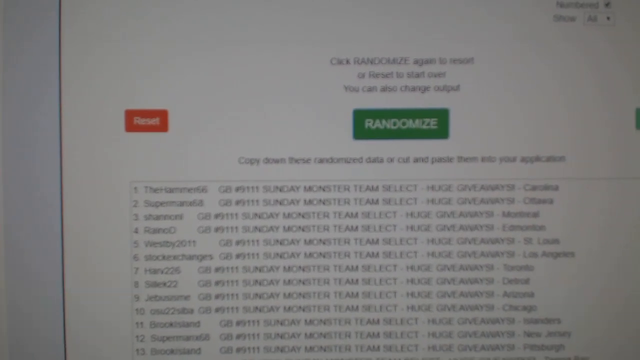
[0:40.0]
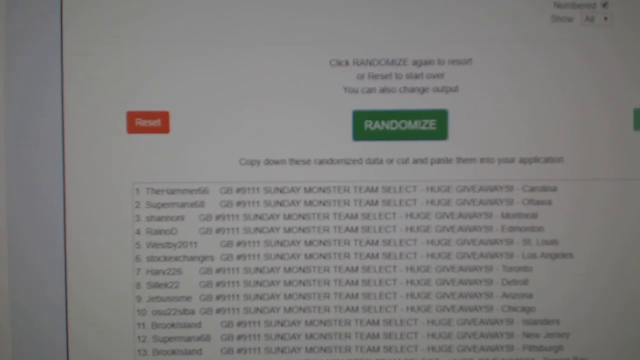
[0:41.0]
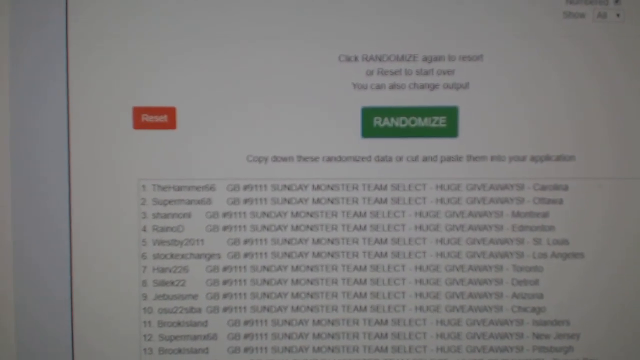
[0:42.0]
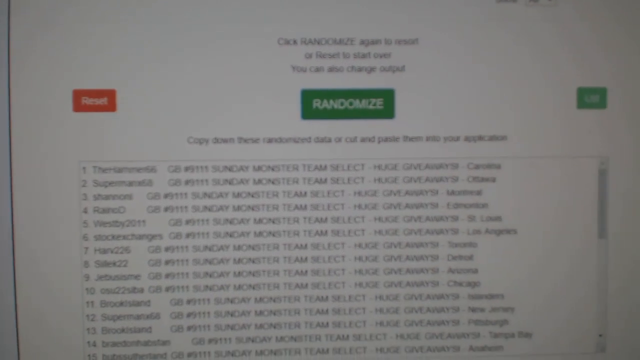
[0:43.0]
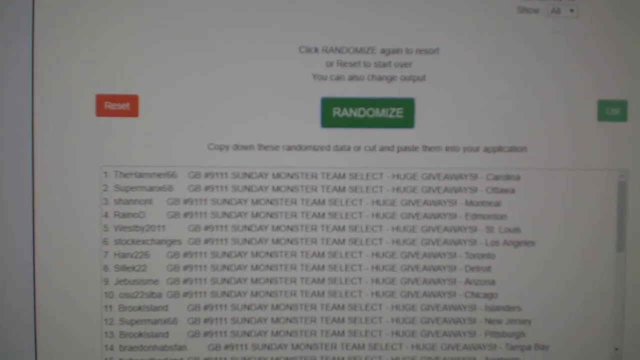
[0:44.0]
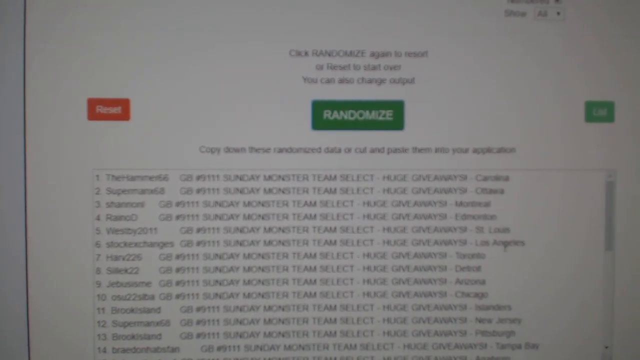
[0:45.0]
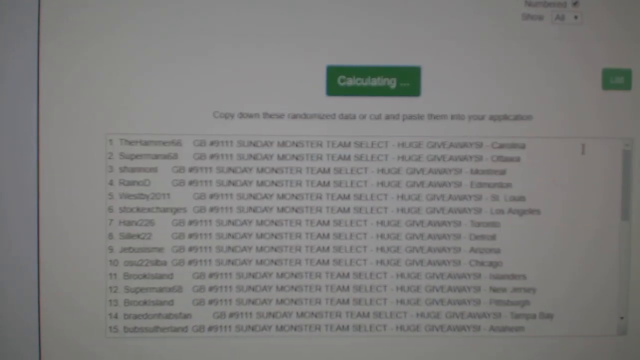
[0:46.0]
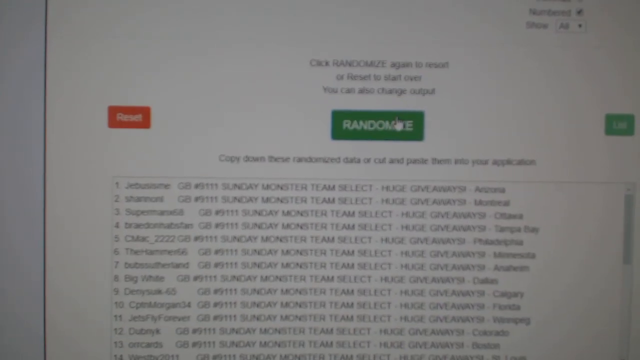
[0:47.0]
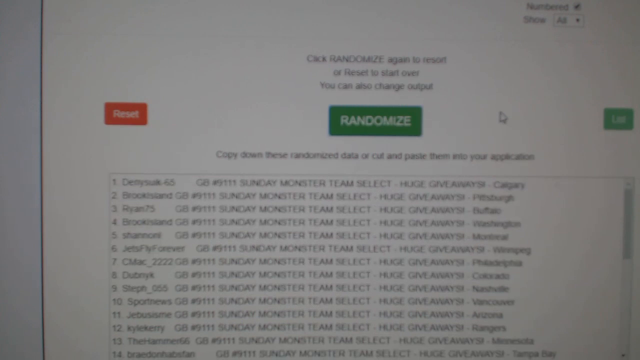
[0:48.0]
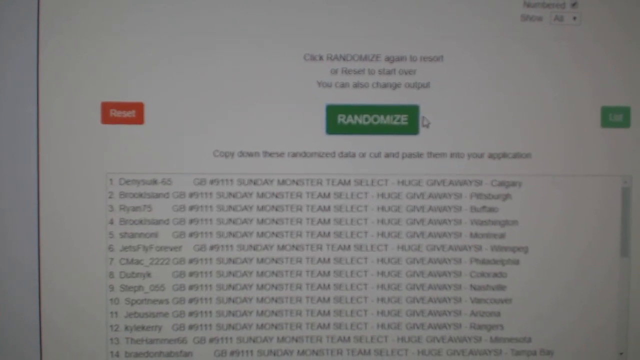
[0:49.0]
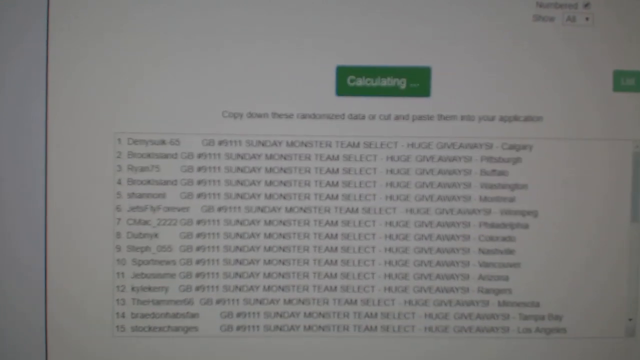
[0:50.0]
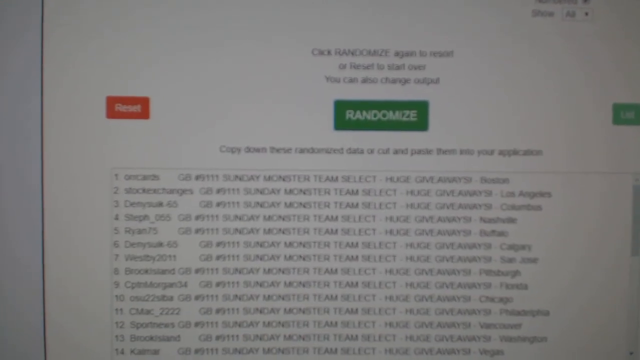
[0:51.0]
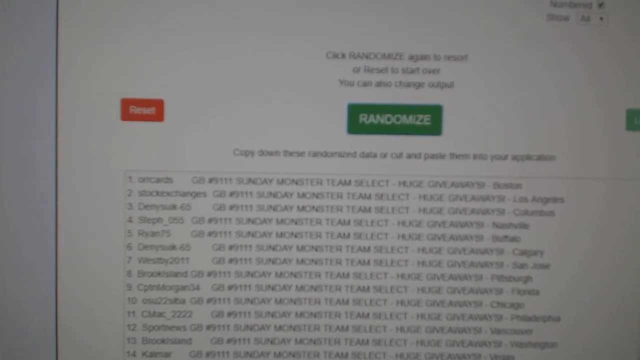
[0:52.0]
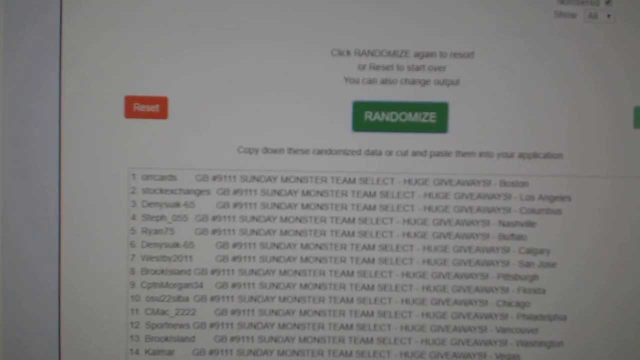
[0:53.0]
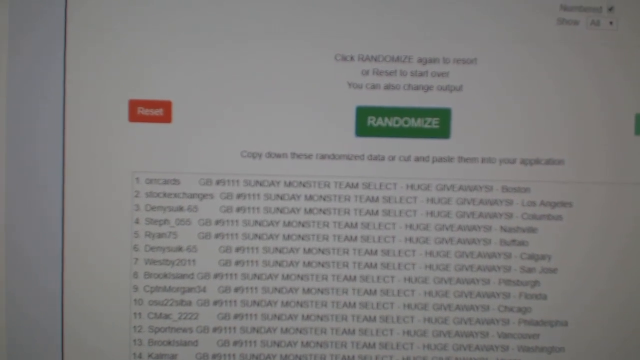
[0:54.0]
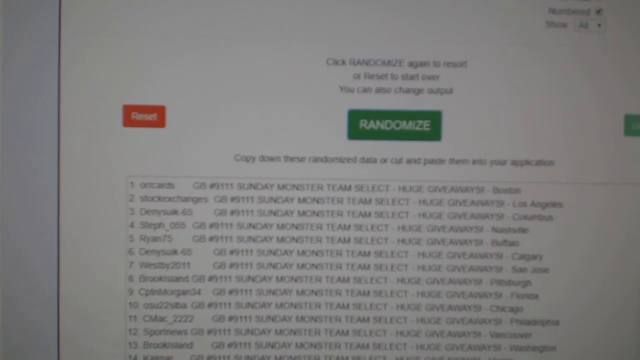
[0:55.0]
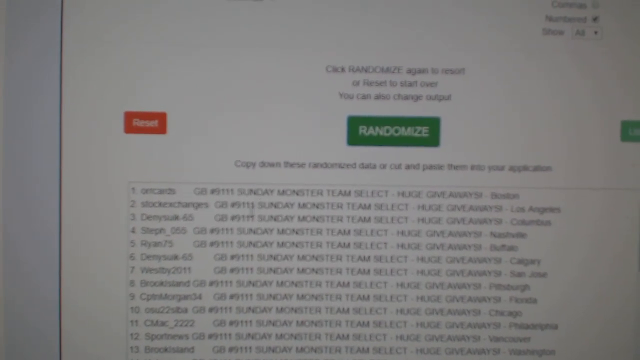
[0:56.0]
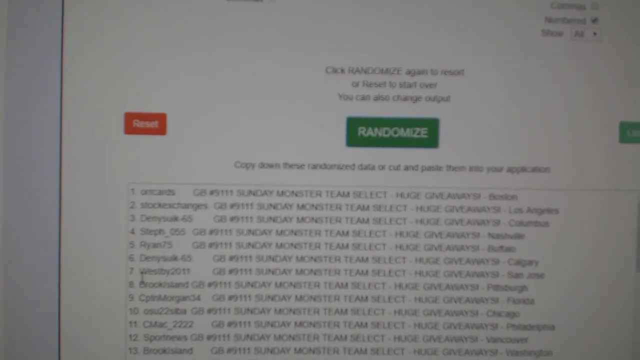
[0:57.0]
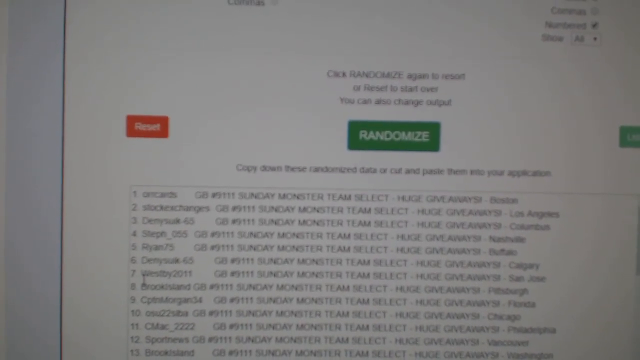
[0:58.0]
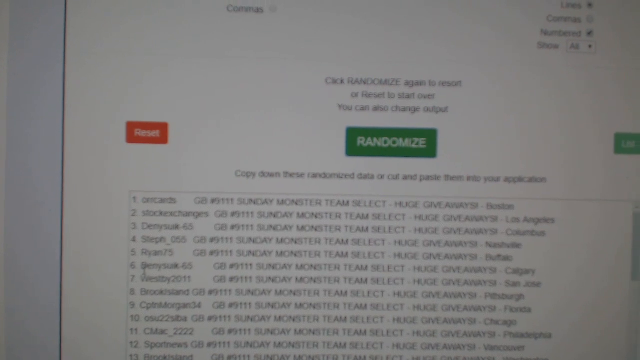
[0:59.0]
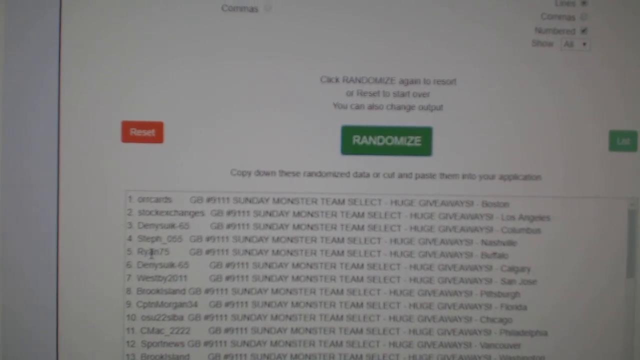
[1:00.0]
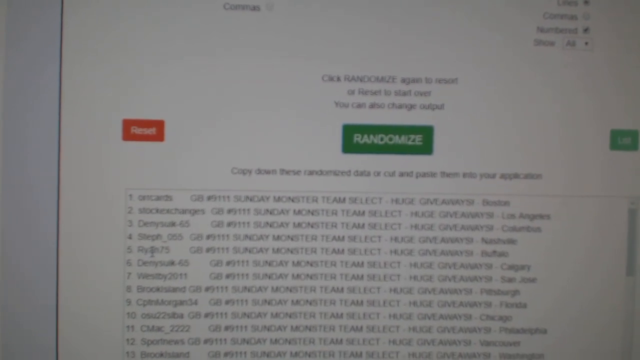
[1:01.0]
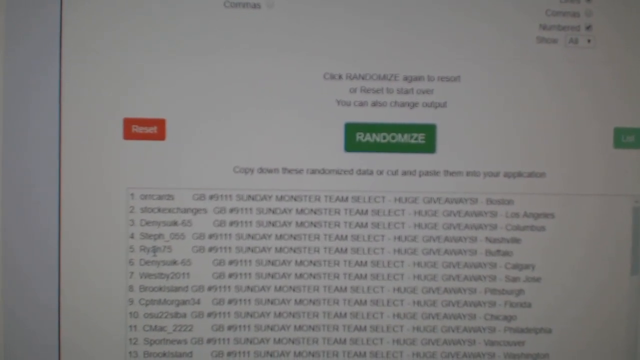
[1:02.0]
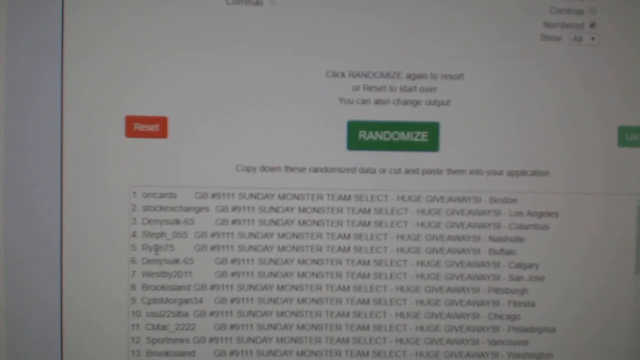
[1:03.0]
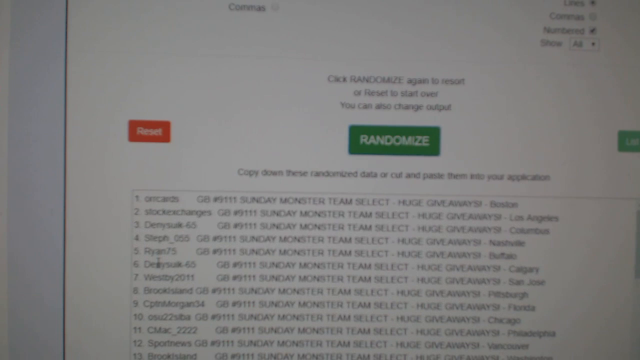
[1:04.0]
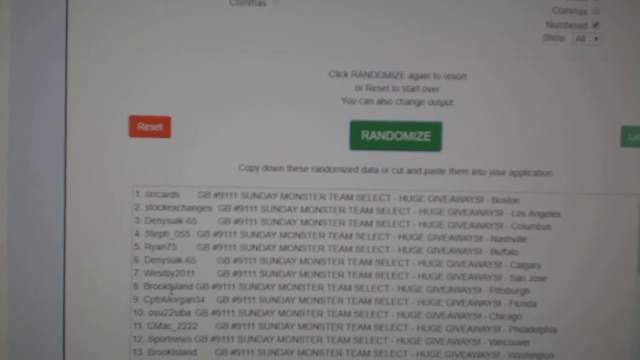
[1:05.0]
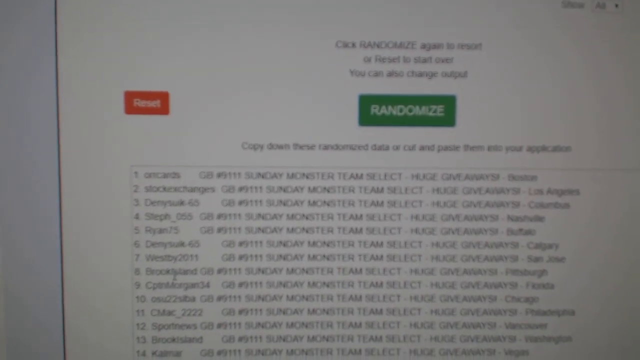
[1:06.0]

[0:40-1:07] The shaky camera faces the computer screen, showing two prominent tabs: a red one that says "Reset" and a green one that says "Randomized." Below the tabs is a text box containing a numbered list. The camera pans slightly to the right, showing more of the desktop screen. The user clicks the Randomized tab, which changes to "Calculating," and the text in the text box changes to a new set of data. The user keeps clicking the Randomized tab, changing the data further. The user then moves the mouse over the text box for a short moment, holding the cursor over number 5 in the list, apparently reading that section. The camera is still shaking as the cursor moves down slightly to between numbers 8 and 9.